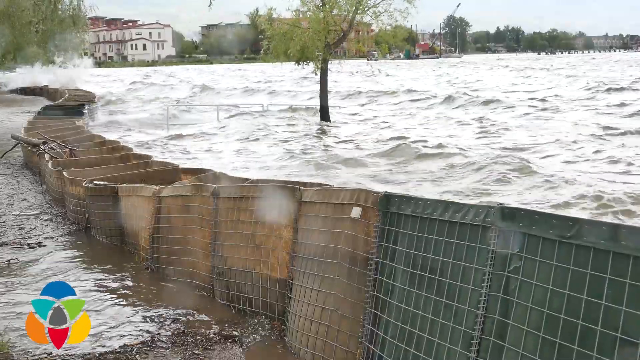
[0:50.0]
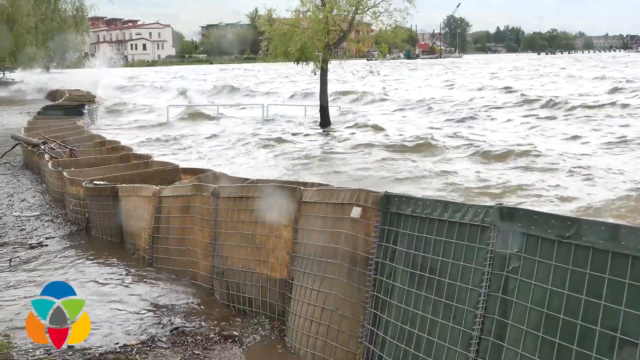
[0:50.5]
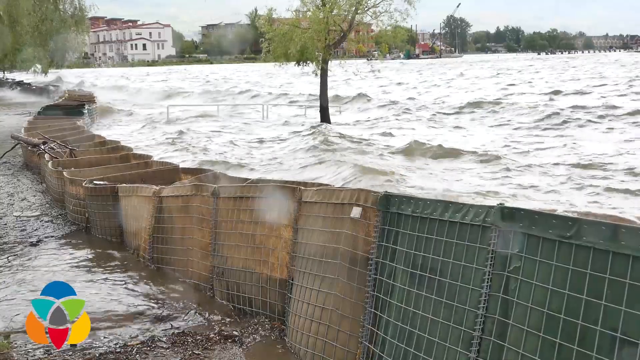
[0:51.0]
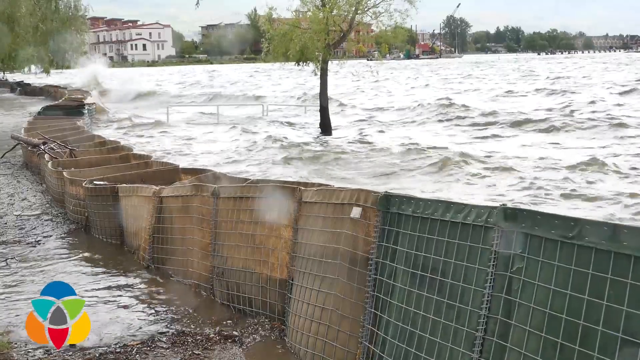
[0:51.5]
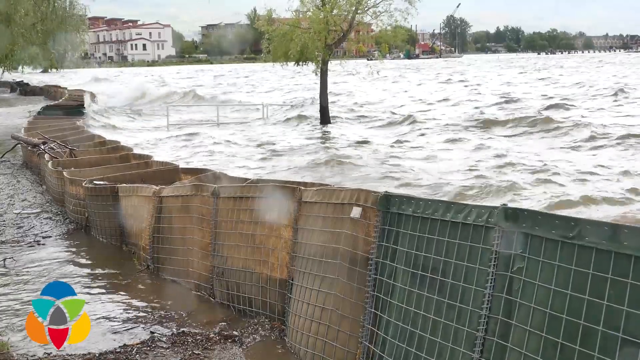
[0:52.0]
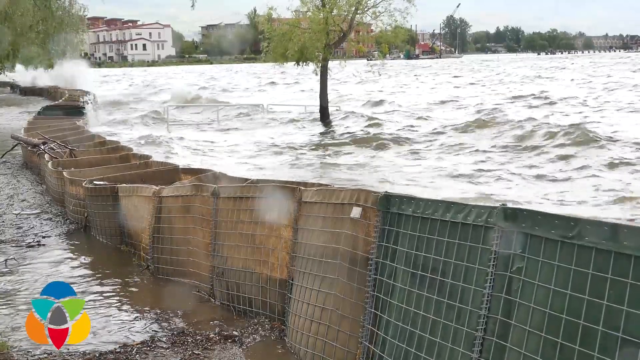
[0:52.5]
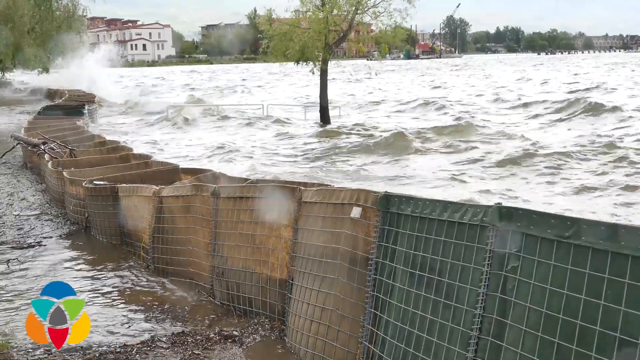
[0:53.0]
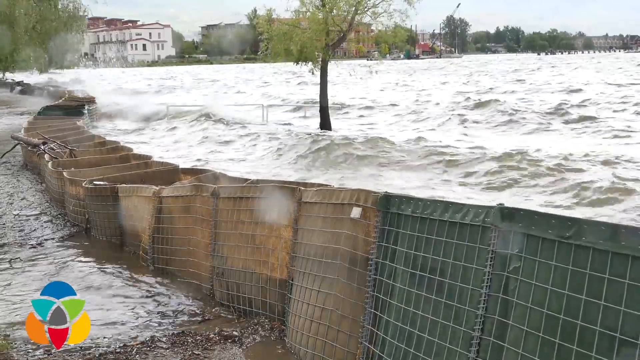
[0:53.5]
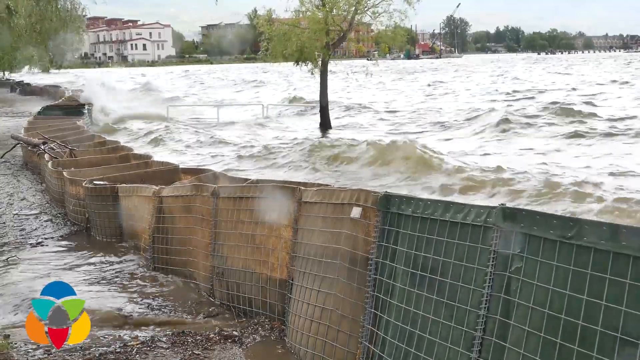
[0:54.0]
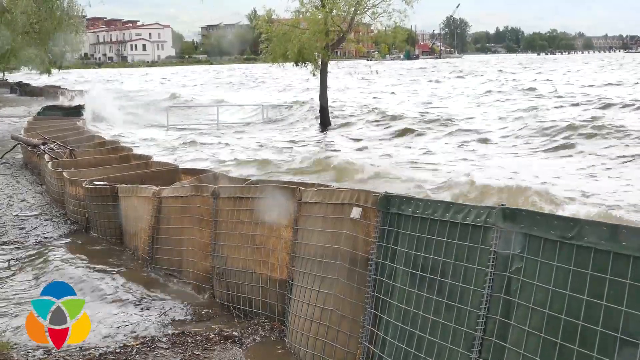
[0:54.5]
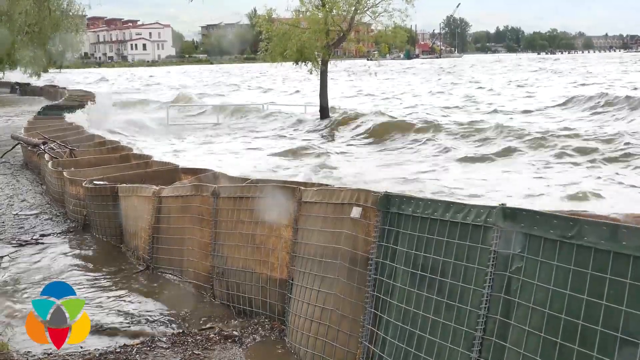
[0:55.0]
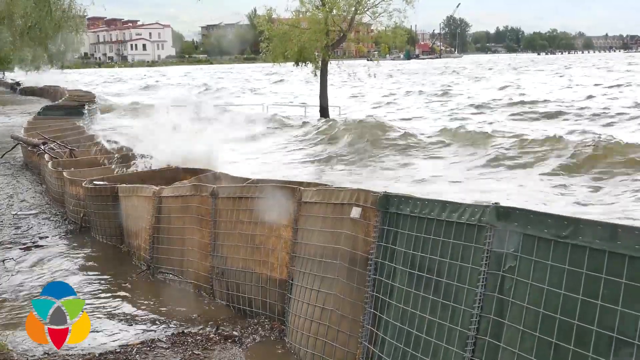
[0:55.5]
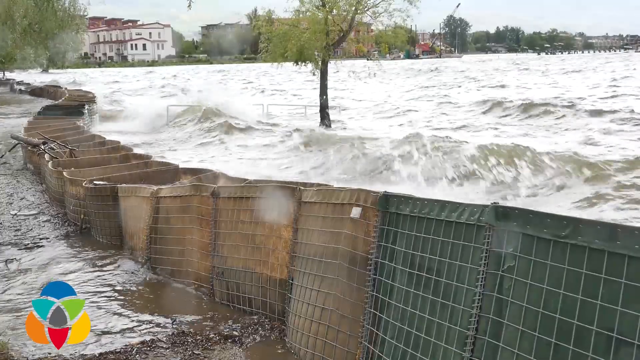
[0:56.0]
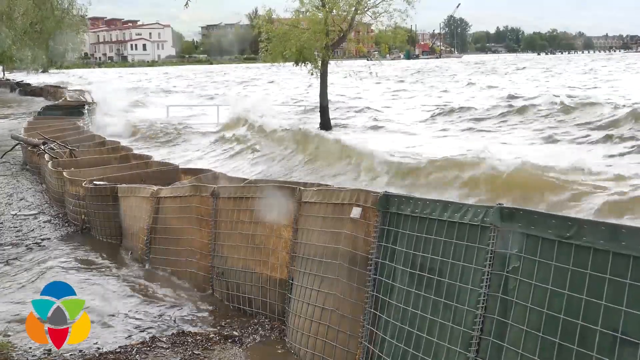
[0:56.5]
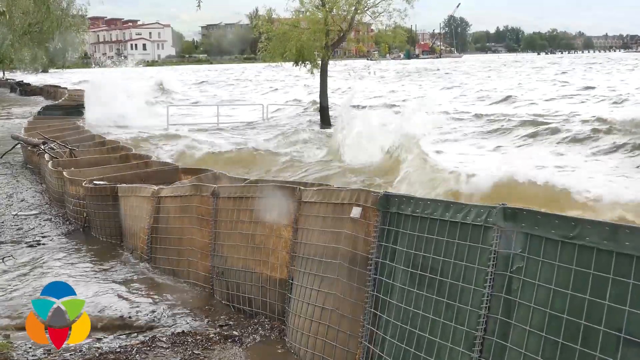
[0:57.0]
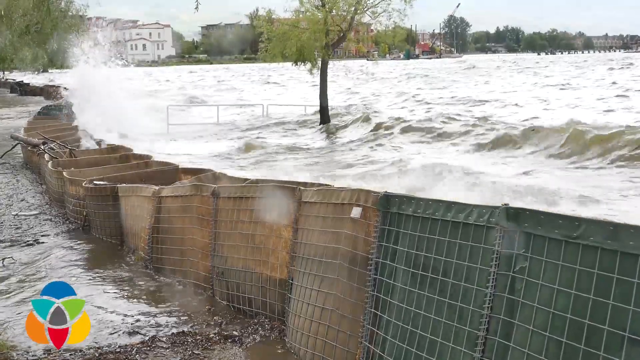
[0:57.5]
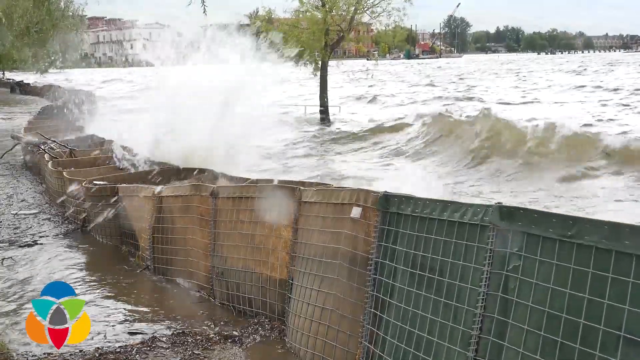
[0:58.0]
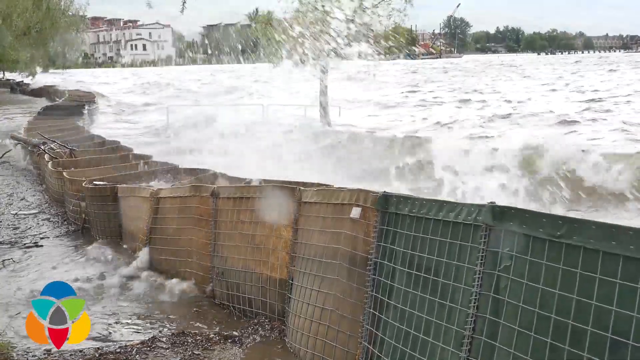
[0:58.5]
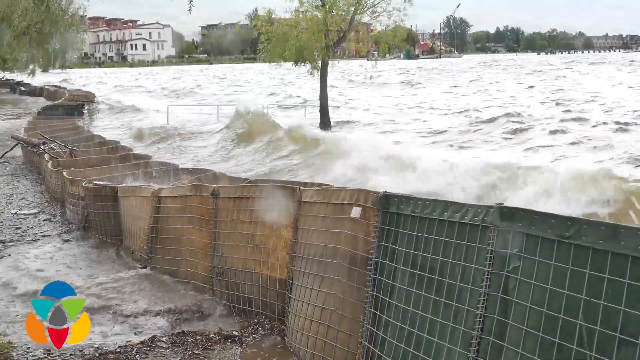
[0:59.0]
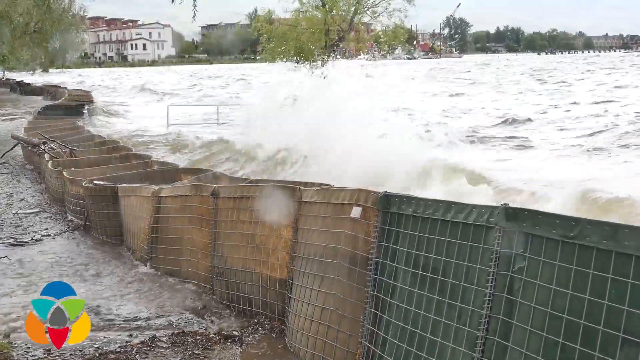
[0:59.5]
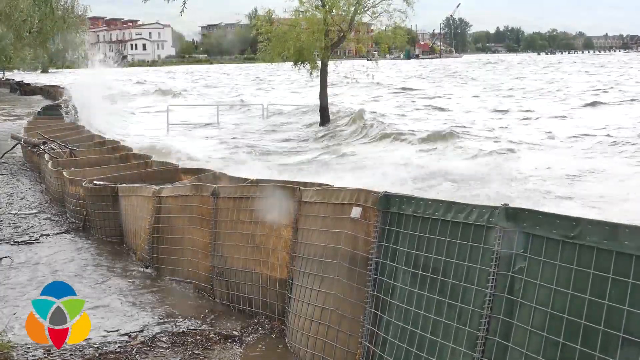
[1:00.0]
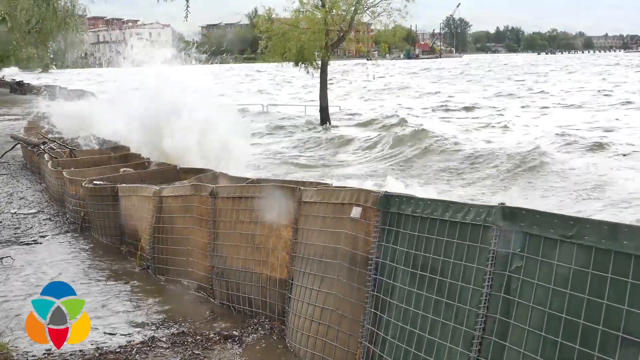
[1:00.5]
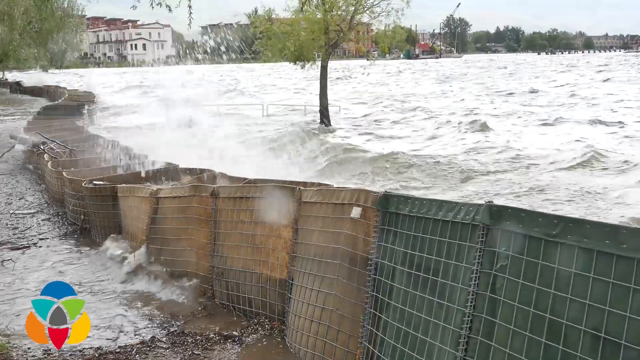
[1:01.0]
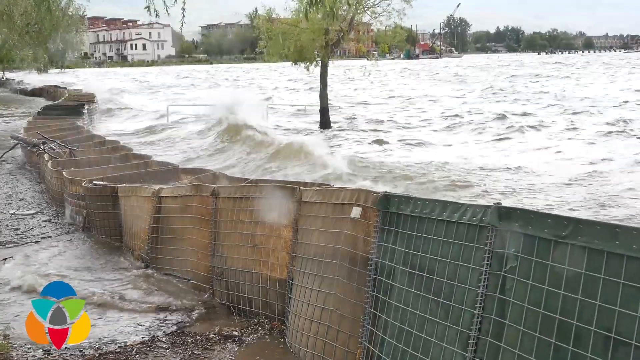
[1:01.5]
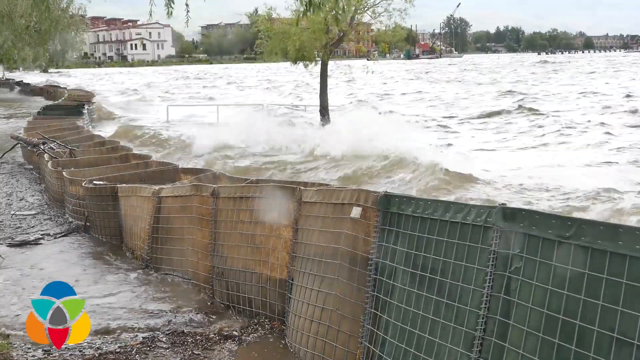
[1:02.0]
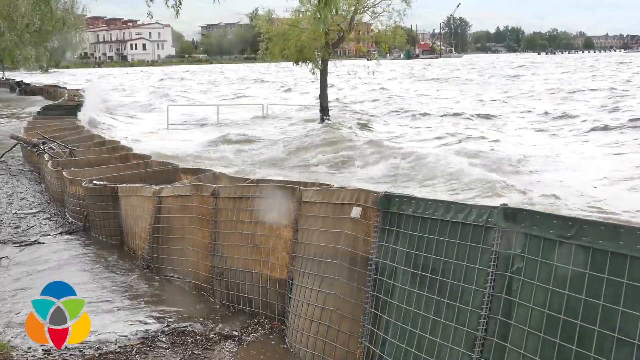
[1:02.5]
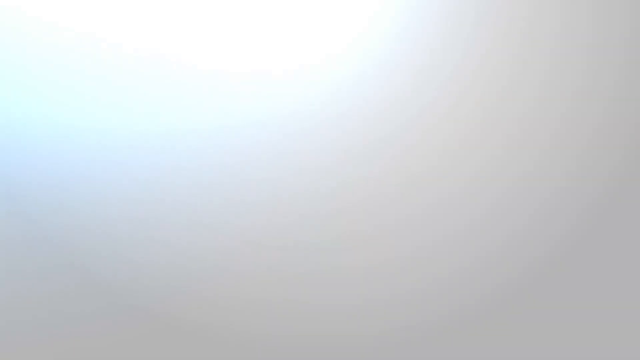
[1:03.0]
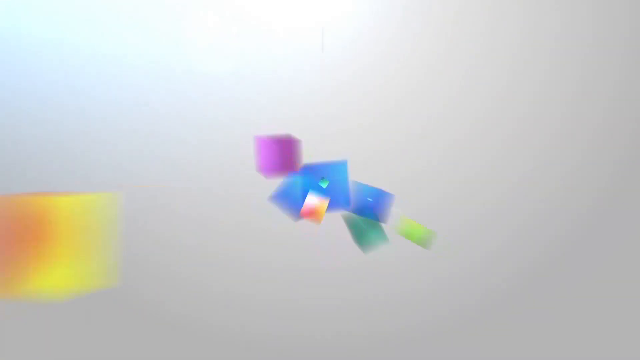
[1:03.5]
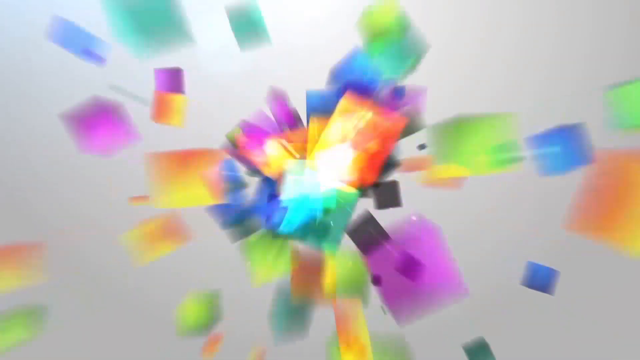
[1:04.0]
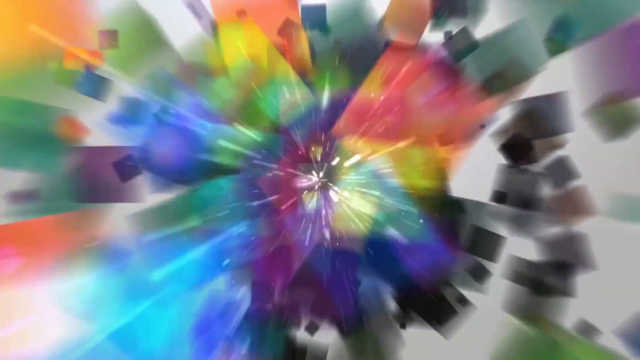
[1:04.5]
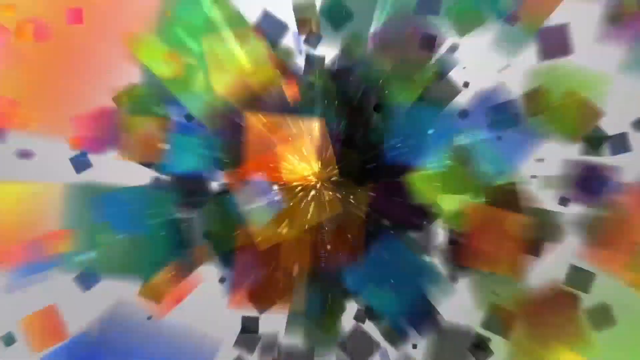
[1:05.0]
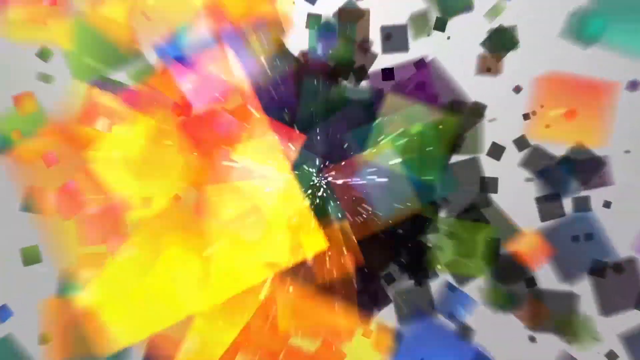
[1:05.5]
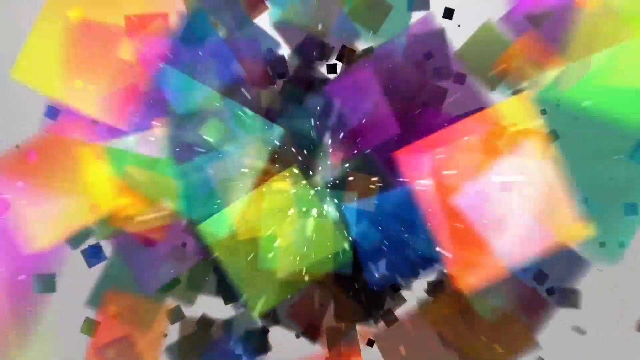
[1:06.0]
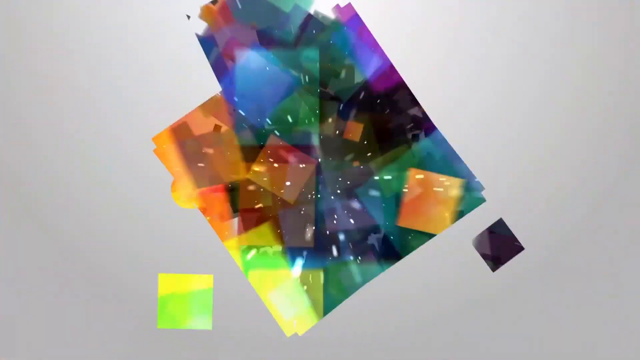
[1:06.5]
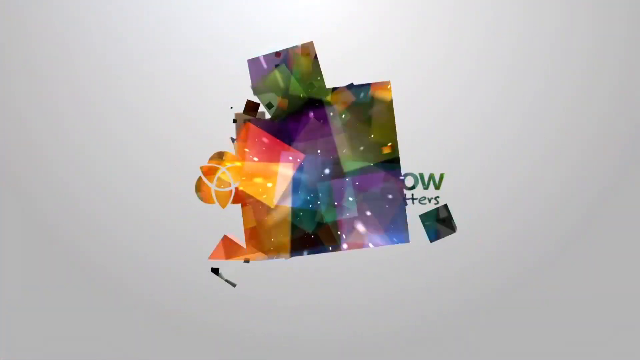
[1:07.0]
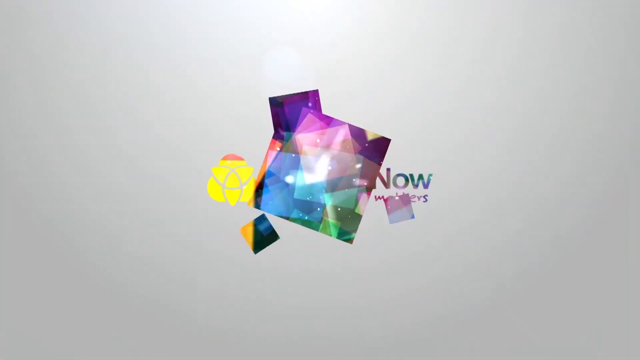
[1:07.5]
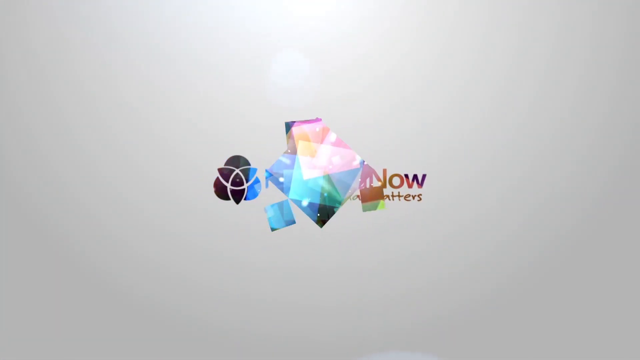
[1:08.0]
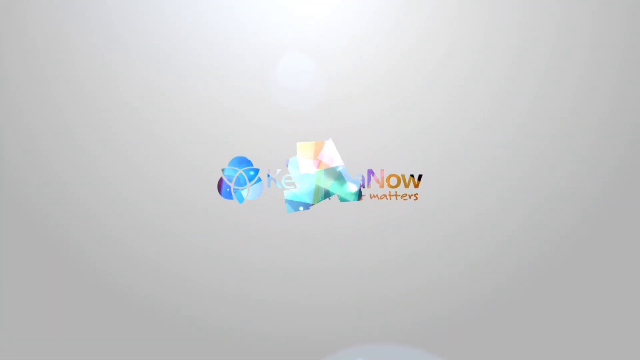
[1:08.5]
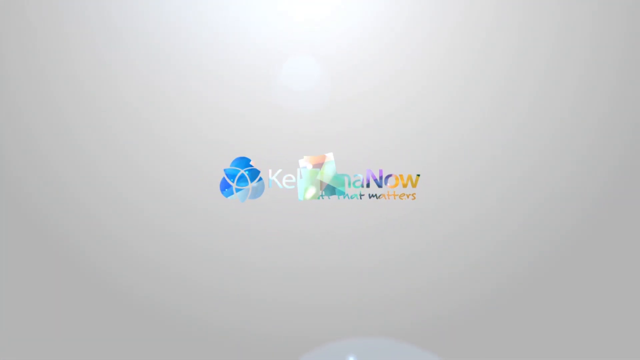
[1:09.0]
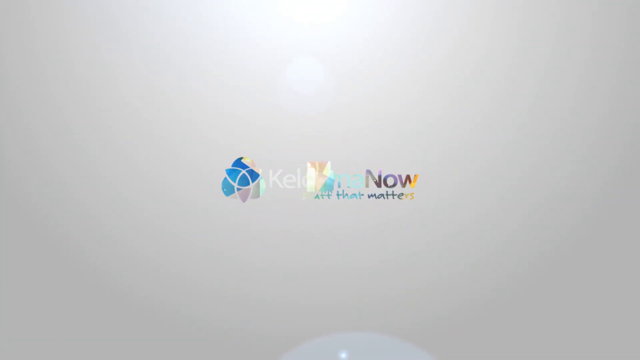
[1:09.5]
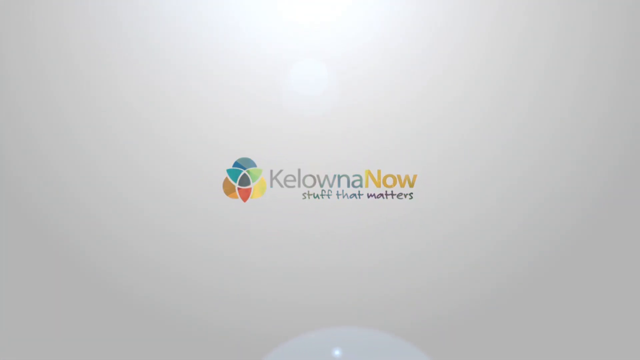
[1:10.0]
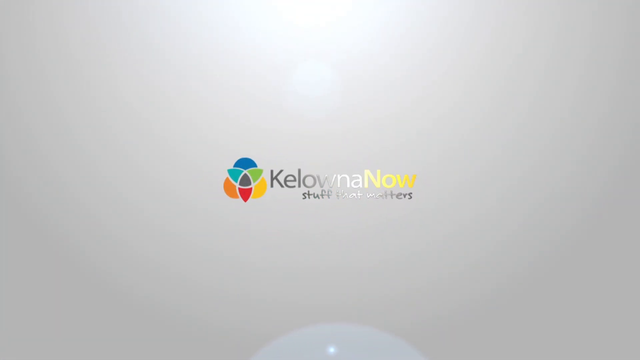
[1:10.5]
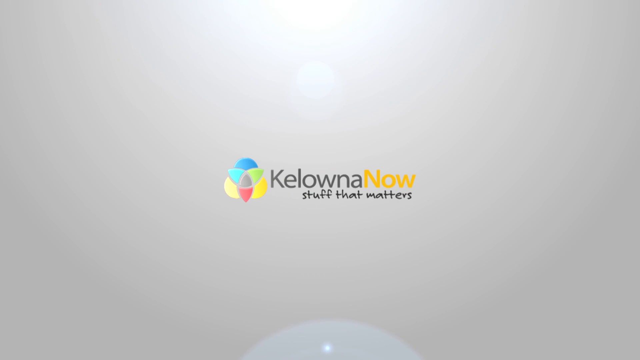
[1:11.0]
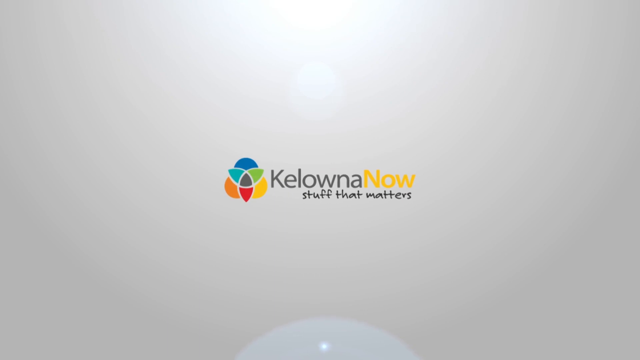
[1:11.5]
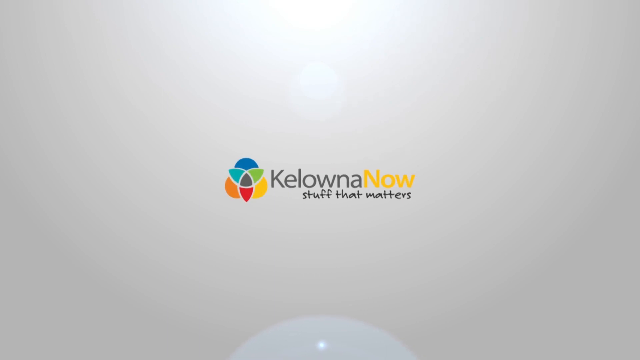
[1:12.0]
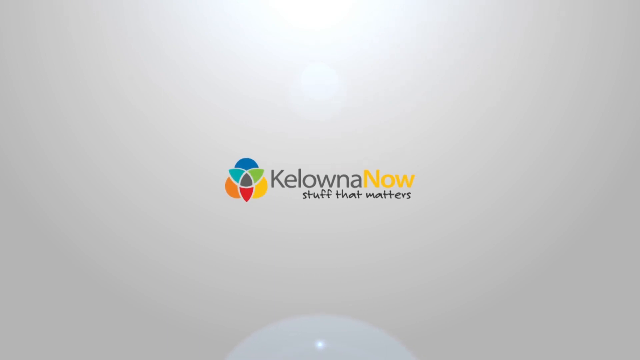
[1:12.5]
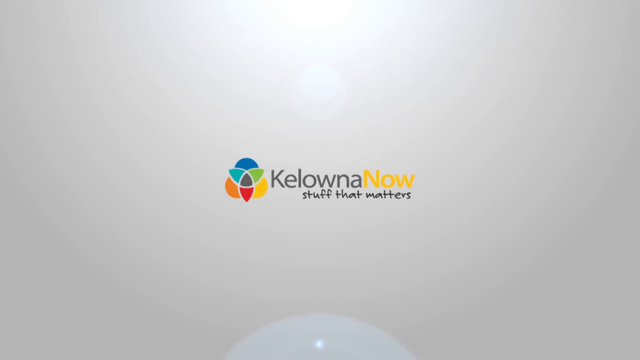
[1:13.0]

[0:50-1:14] A lot of water is shown, seemingly floods. There are some trees, one of them at the center of the water. At the far end are buildings painted white with red tops. The sky is somewhat clear, but its farthest end is not clear. A construction seems to restrain the water from reaching the buildings. The water is violent, moved by the wind, and dirty. The tree branches are almost withering, and there is a piece of metal at the center of the water. At the end, many colors zoom out to show "Kelowna, stuff that matters".